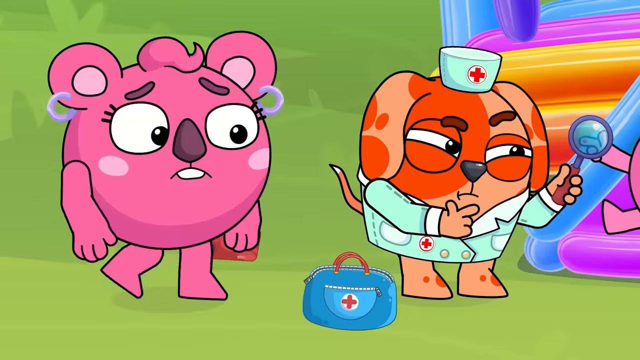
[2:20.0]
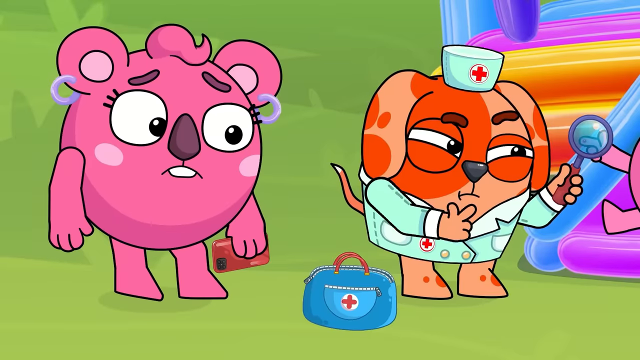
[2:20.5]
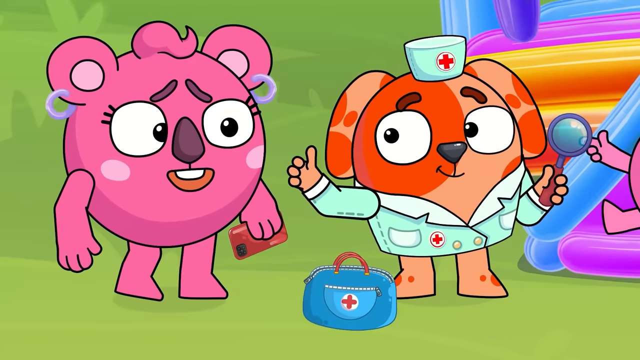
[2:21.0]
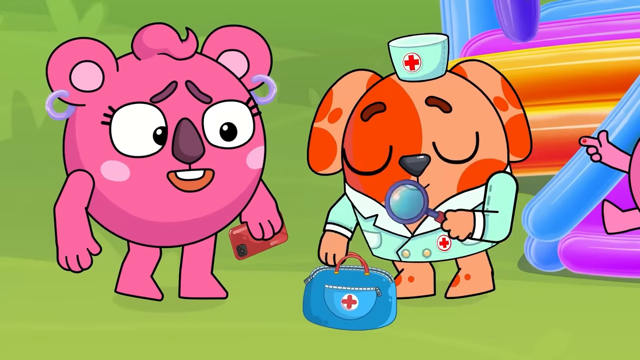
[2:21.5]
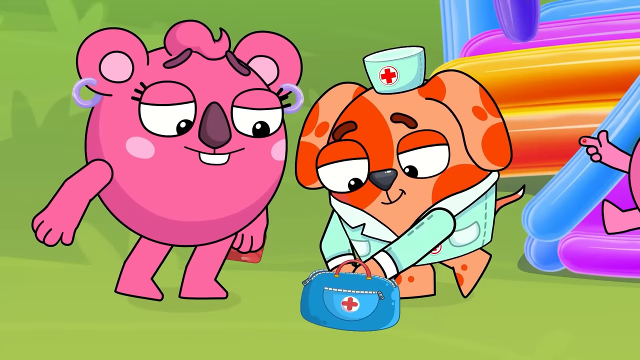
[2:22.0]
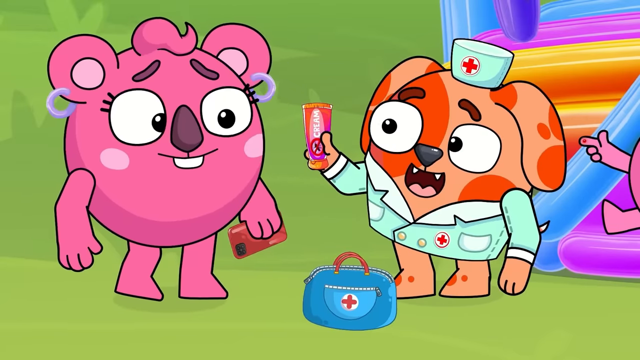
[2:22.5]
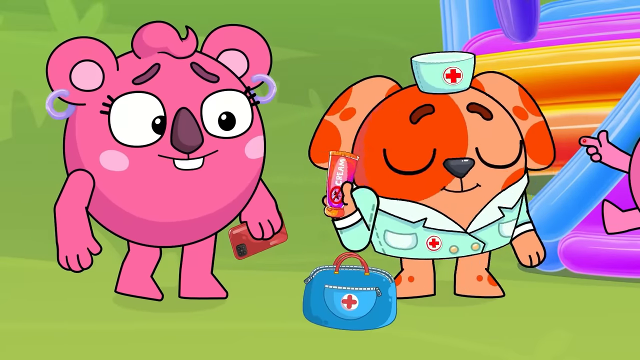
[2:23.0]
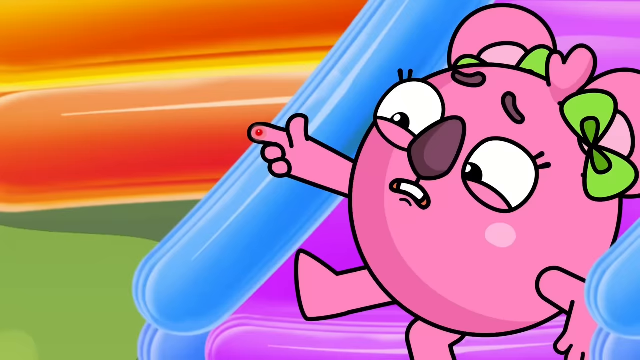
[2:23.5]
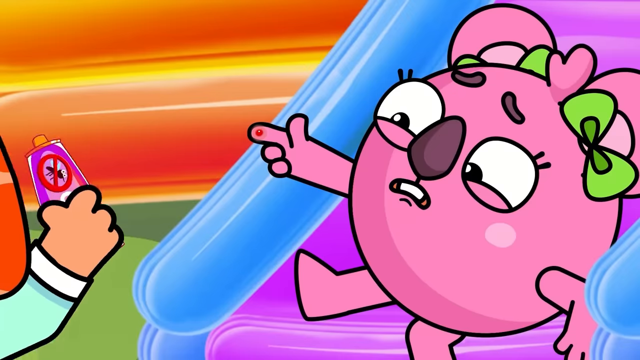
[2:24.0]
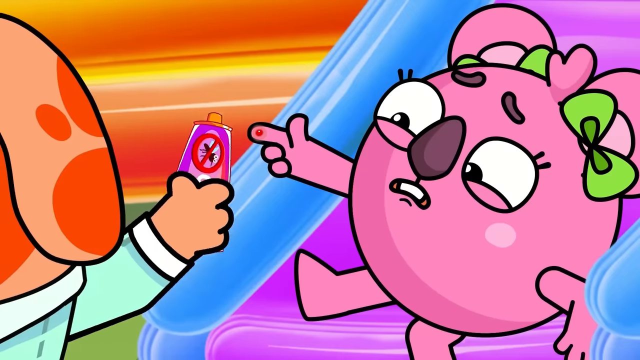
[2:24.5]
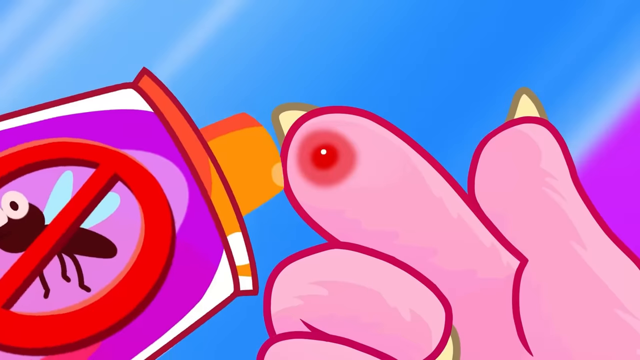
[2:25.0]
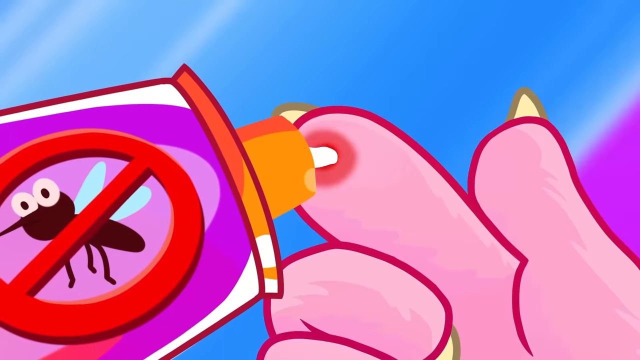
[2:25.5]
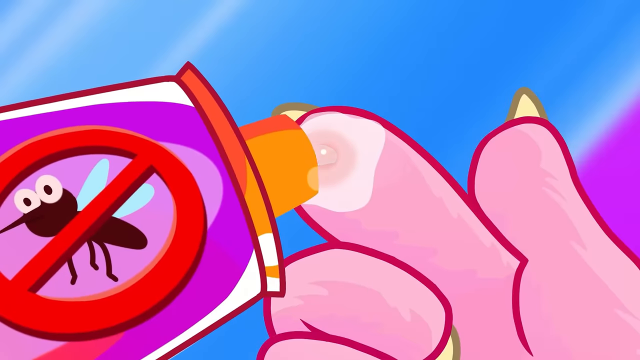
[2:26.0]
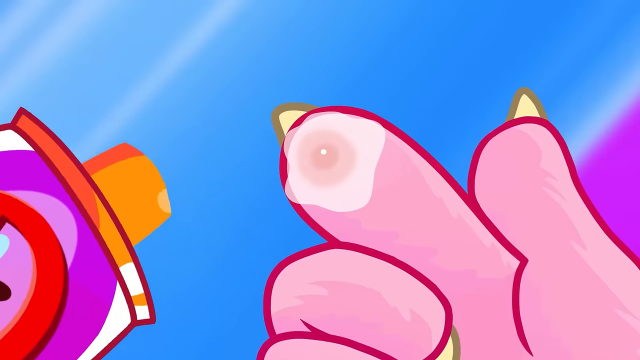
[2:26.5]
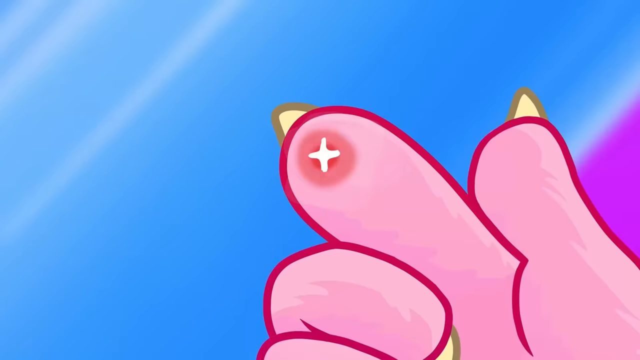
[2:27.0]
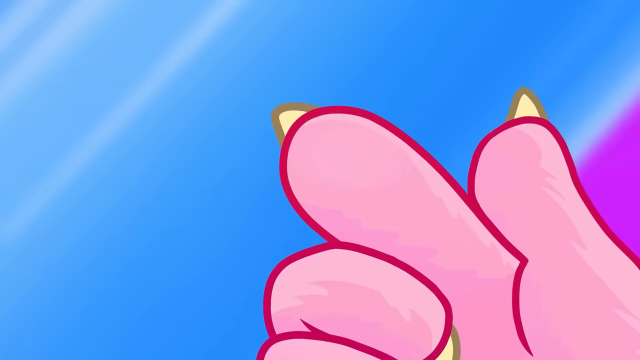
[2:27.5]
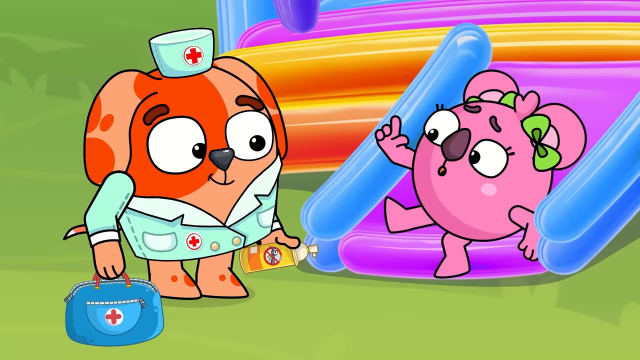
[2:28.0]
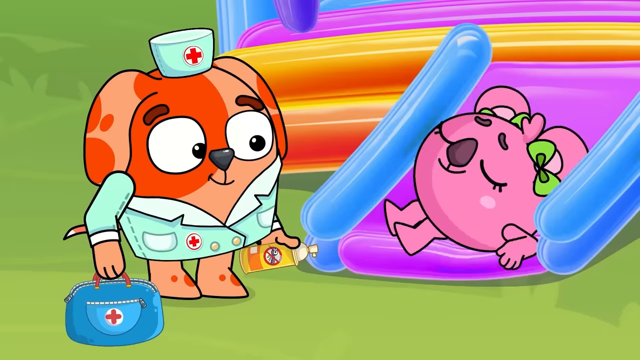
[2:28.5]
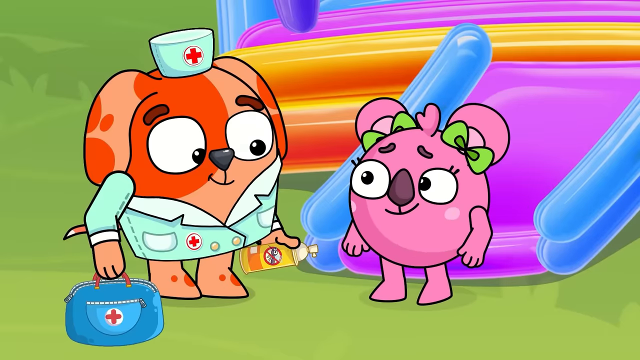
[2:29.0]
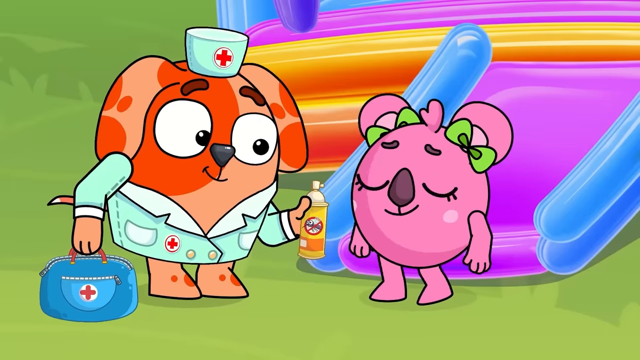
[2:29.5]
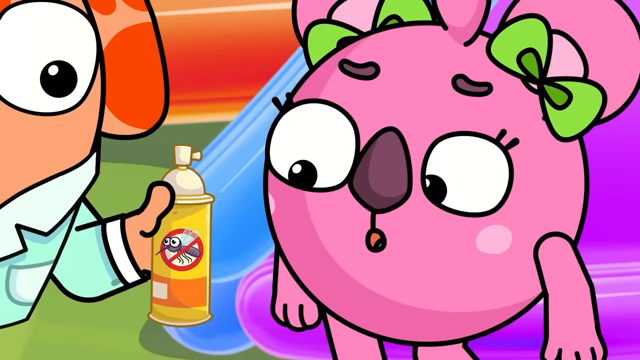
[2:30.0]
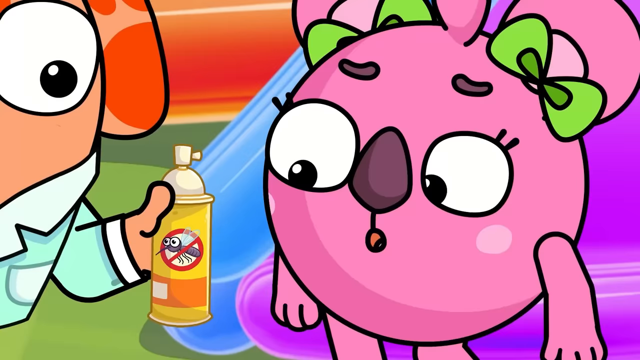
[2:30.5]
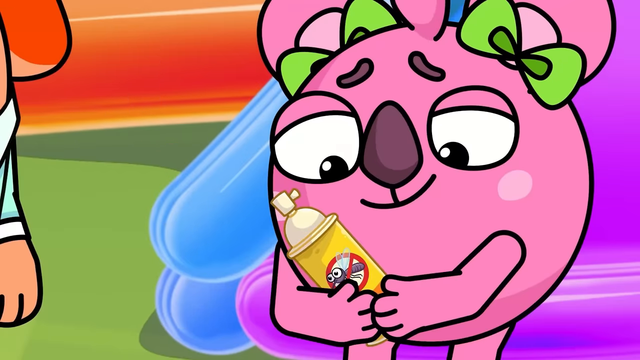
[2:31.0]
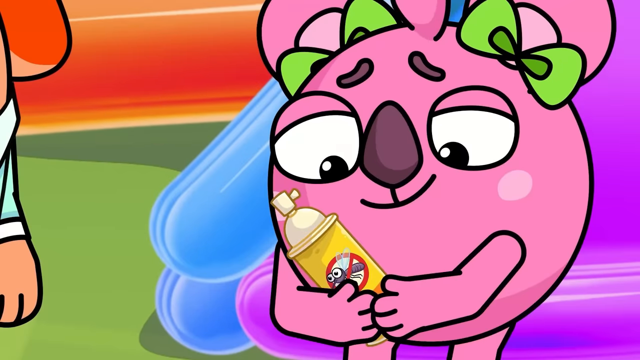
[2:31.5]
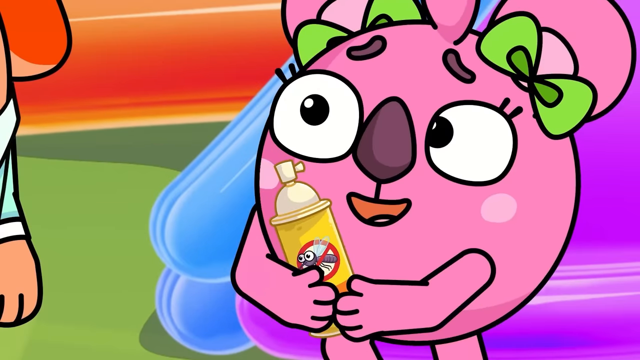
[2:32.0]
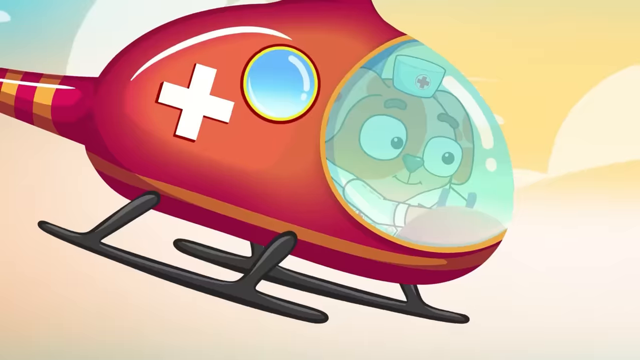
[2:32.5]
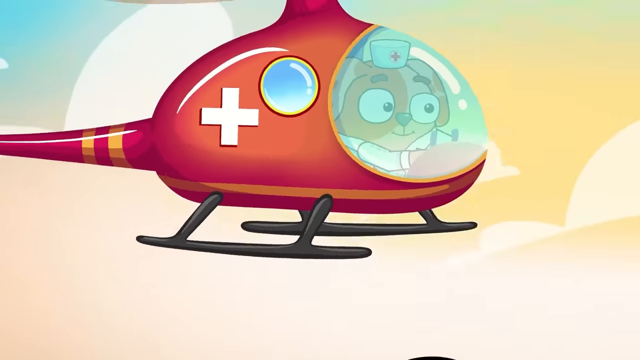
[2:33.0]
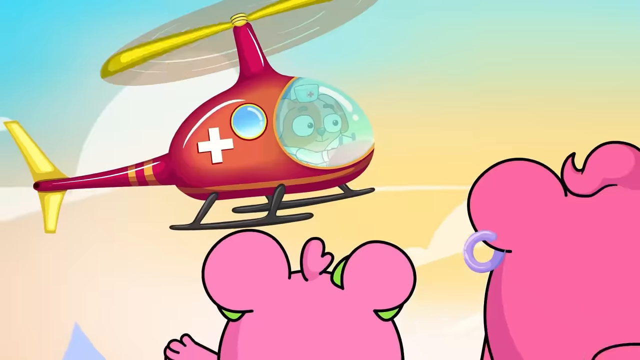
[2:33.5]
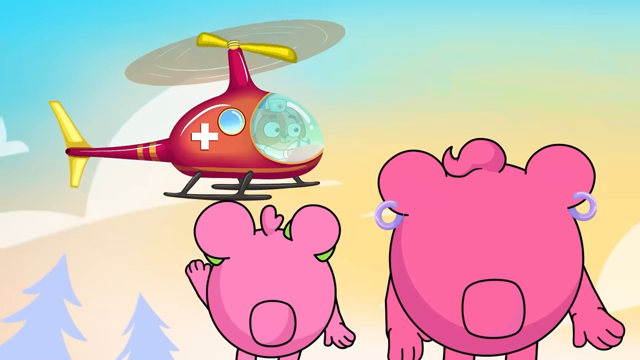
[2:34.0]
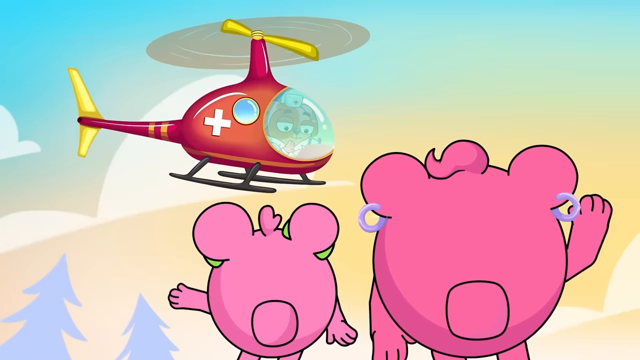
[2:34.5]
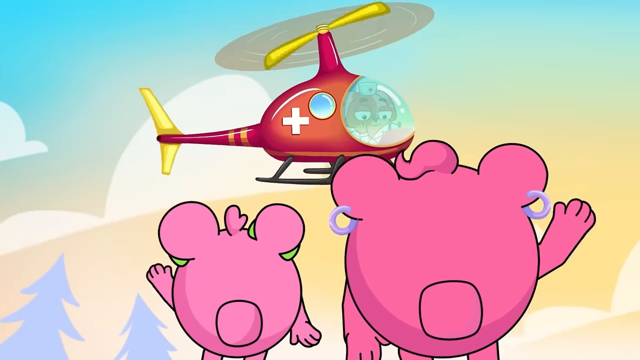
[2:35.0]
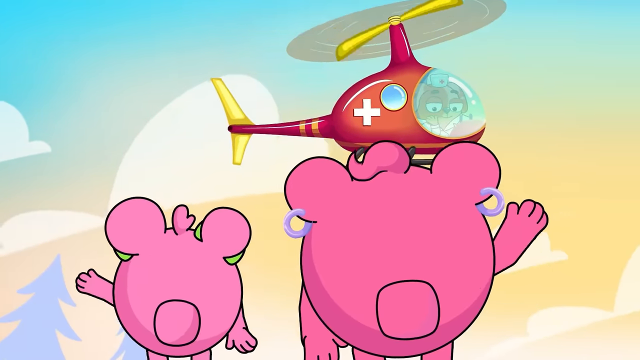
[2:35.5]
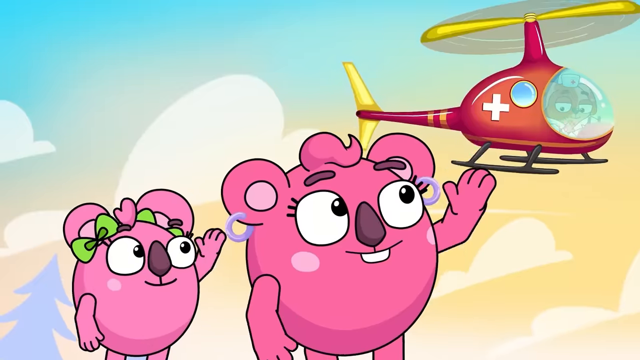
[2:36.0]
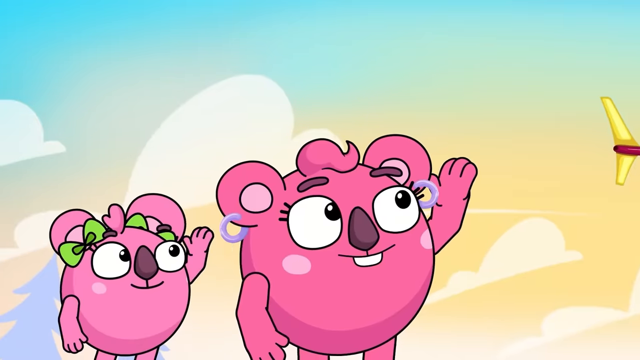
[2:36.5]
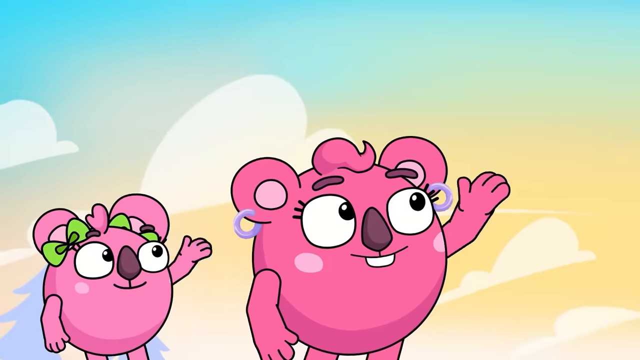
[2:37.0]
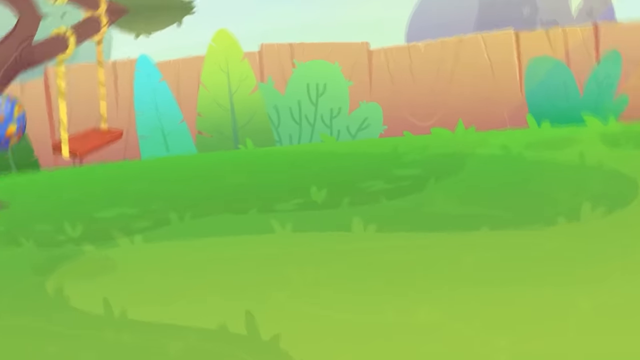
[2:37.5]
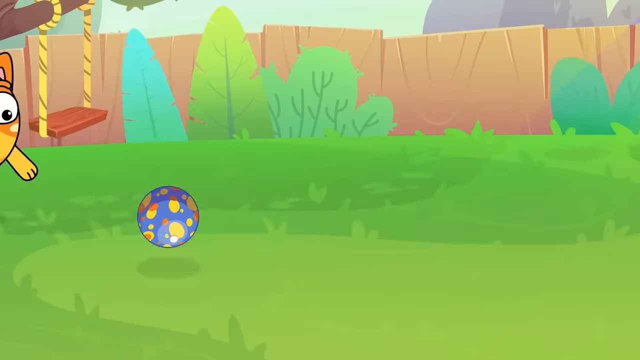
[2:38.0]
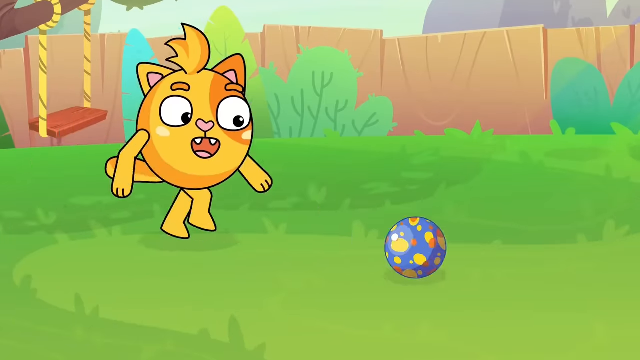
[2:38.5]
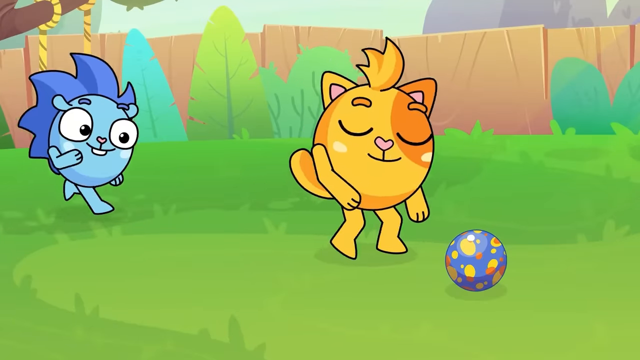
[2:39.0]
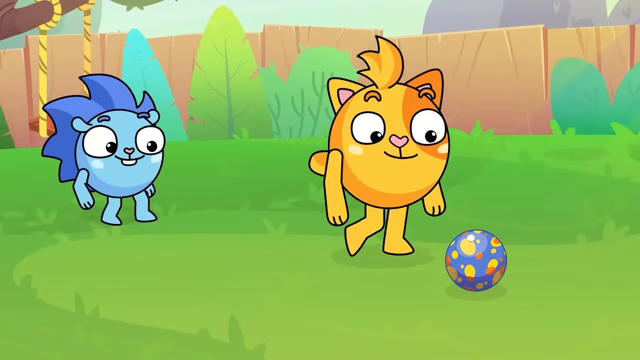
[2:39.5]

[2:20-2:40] There is a pink bear; the mom bear looks concerned and looks at the dog. The dog has paws for ears, an orange mark and a light orange mark, one hand on its chin and one finger tapping, and wears a blue mint jacket, kind of a medical jacket. A blue medical bag with a red cross, a red handle and zippers is on the ground, and there is a thumbs up. There are red things, pink hands and more balloons. Cream is applied, the bite pops and goes away, and the little girl is satisfied. She is handed anti-mosquito spray and seems pretty happy, and someone leaves, waving goodbye. The scene returns to the little orange cat and the blue creature, who chase what appears to be a ball.